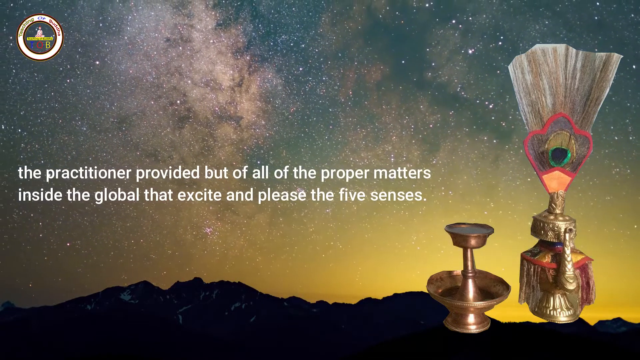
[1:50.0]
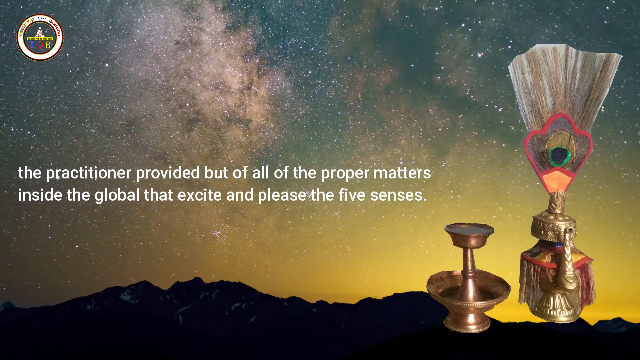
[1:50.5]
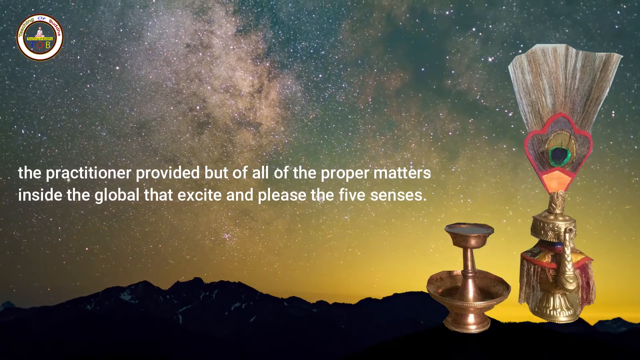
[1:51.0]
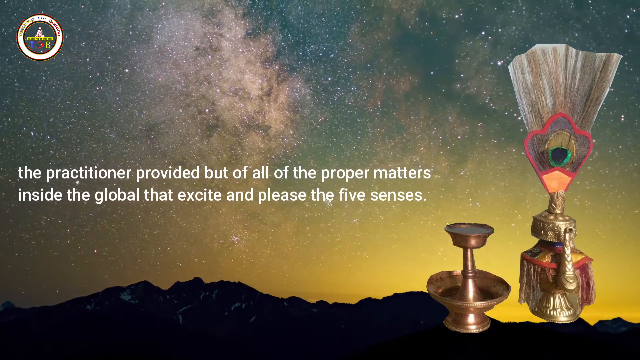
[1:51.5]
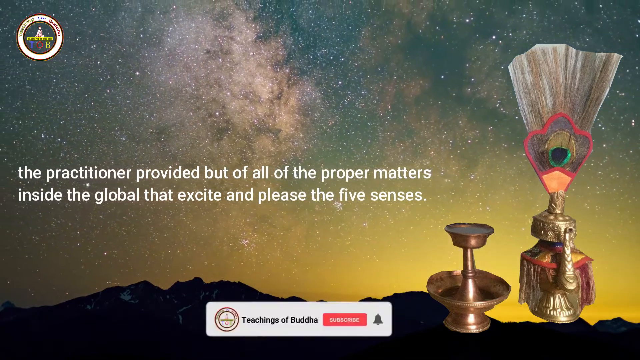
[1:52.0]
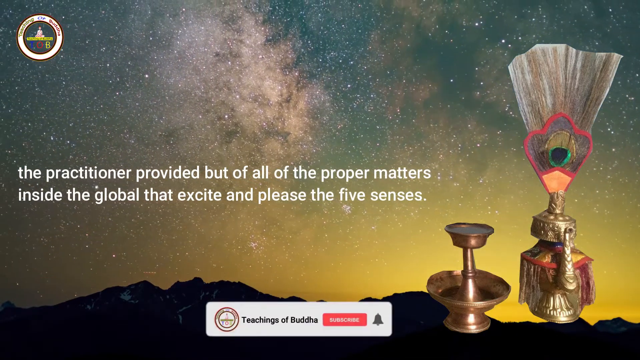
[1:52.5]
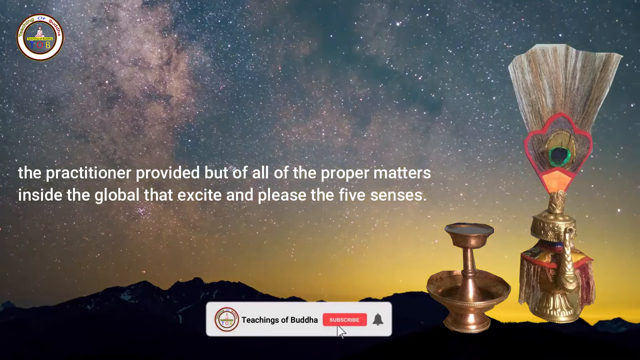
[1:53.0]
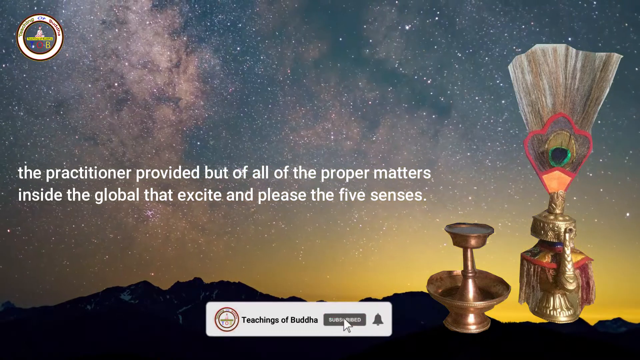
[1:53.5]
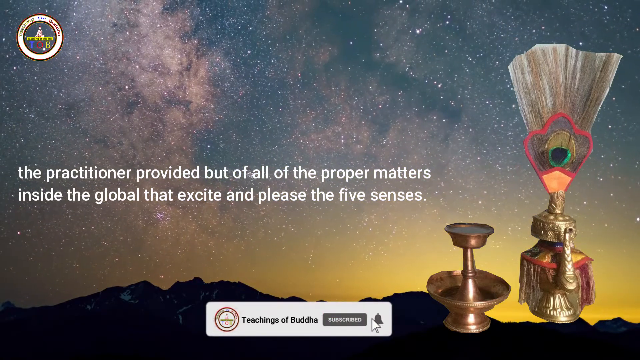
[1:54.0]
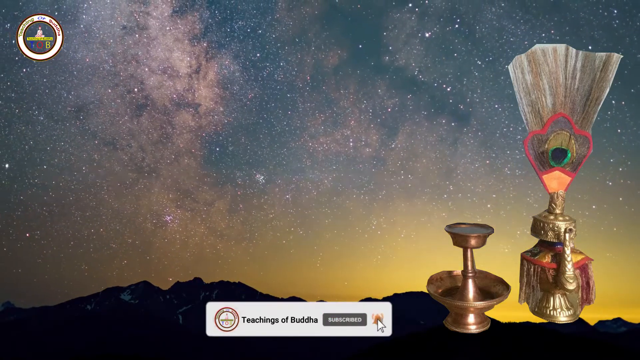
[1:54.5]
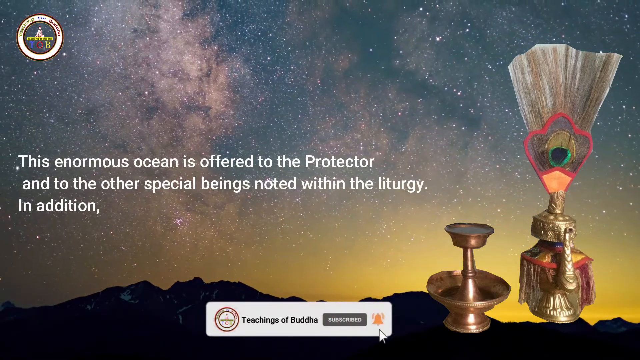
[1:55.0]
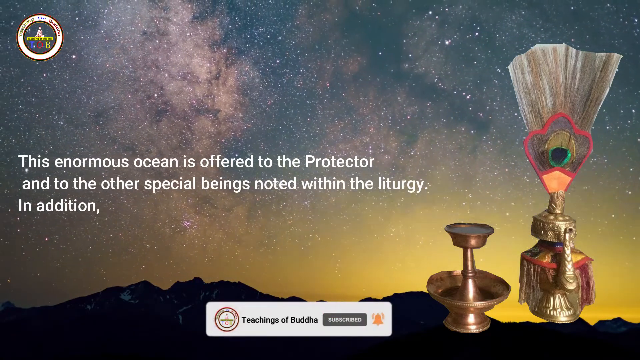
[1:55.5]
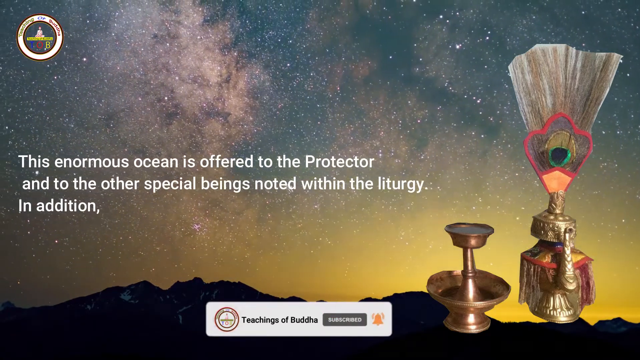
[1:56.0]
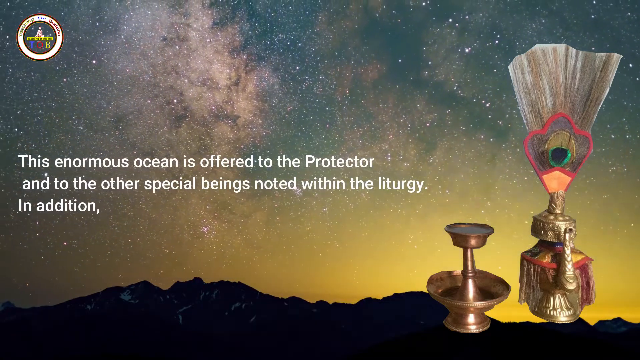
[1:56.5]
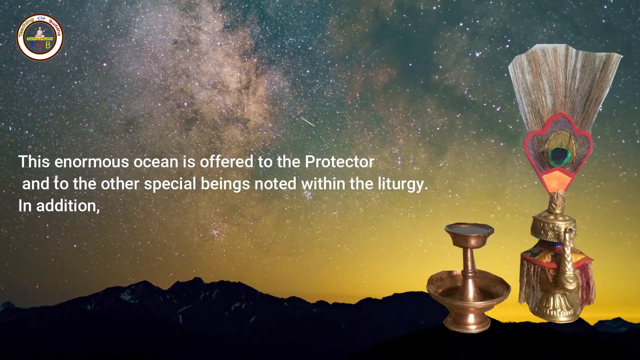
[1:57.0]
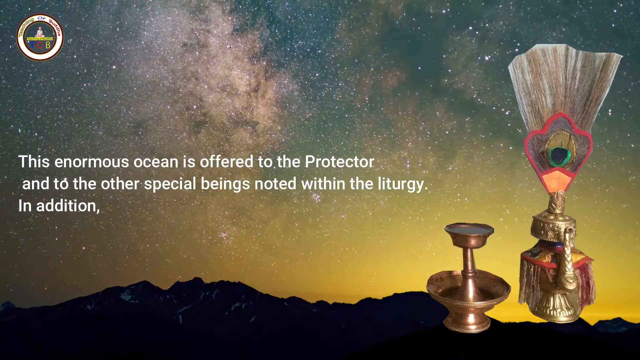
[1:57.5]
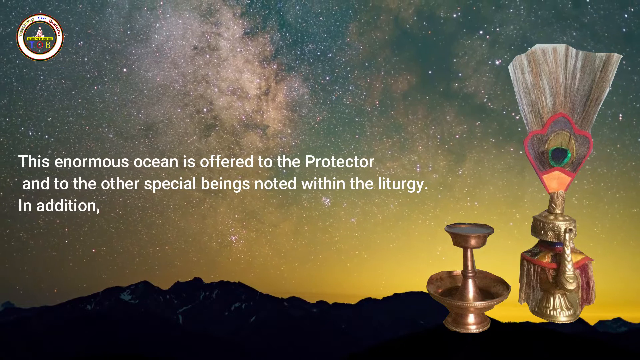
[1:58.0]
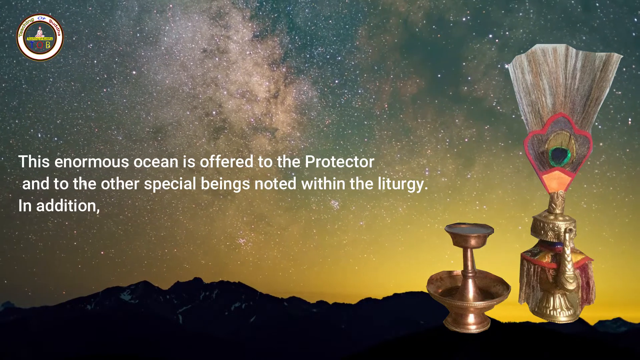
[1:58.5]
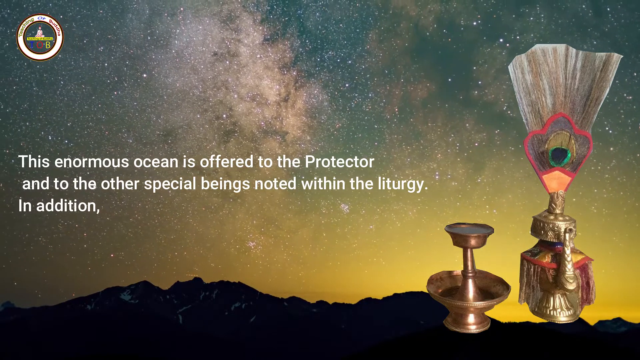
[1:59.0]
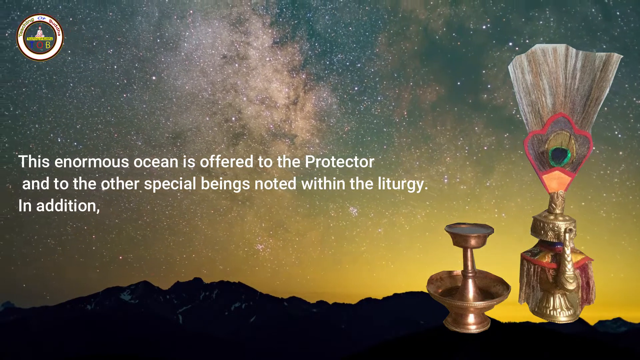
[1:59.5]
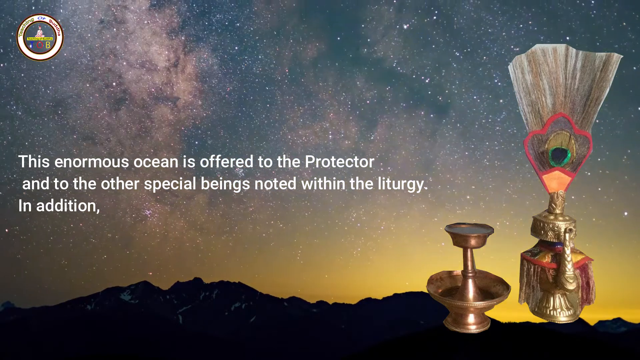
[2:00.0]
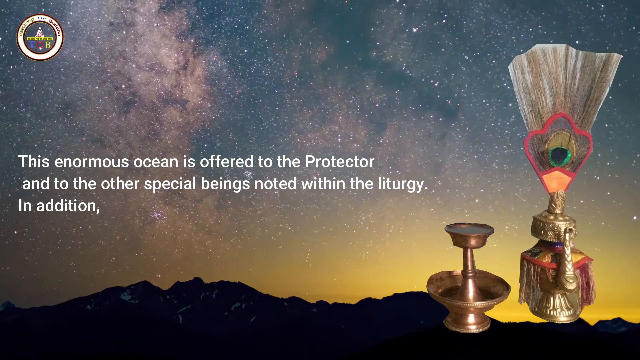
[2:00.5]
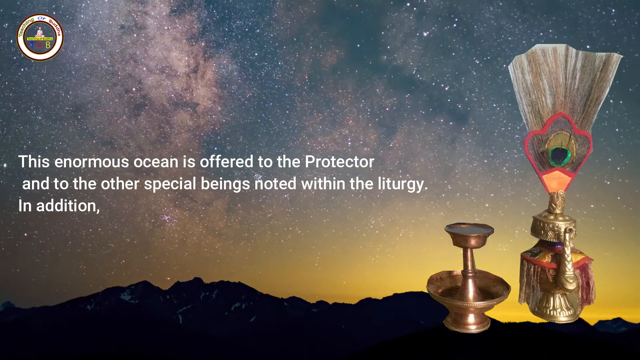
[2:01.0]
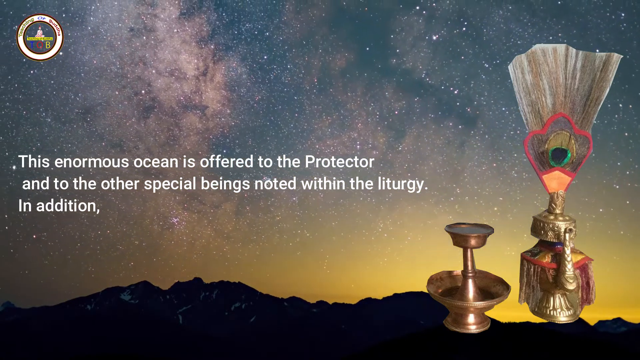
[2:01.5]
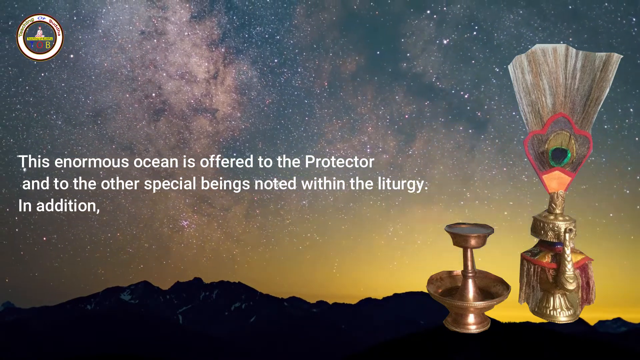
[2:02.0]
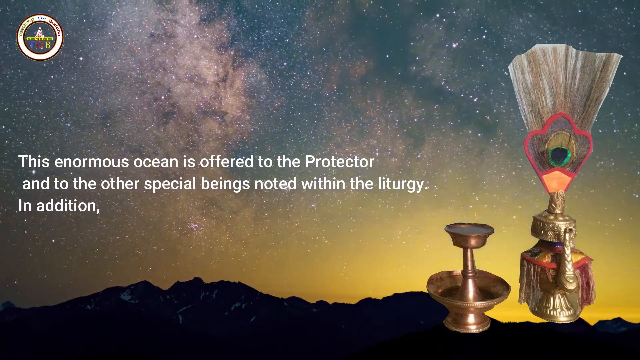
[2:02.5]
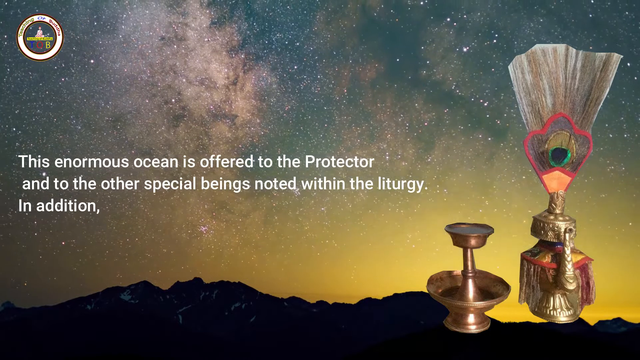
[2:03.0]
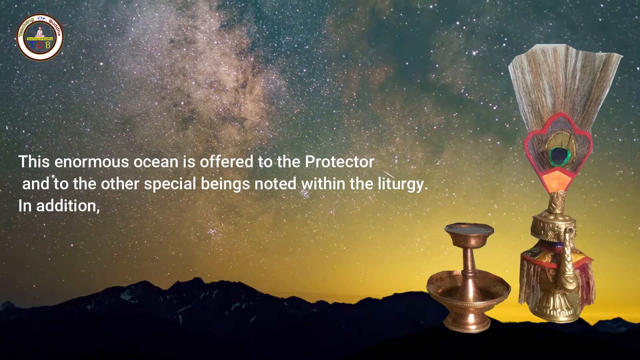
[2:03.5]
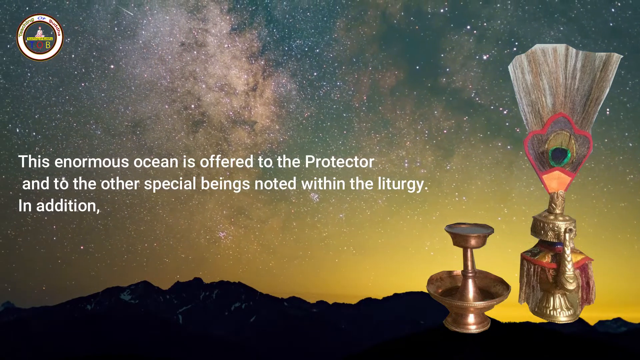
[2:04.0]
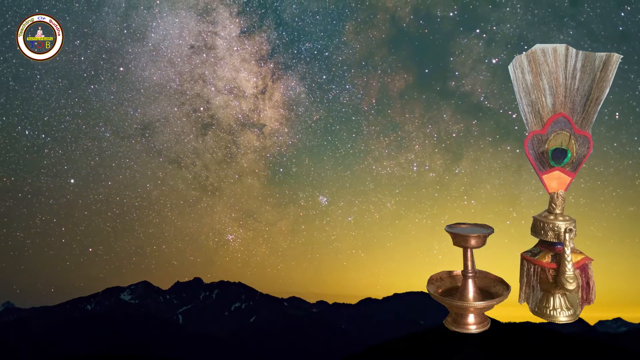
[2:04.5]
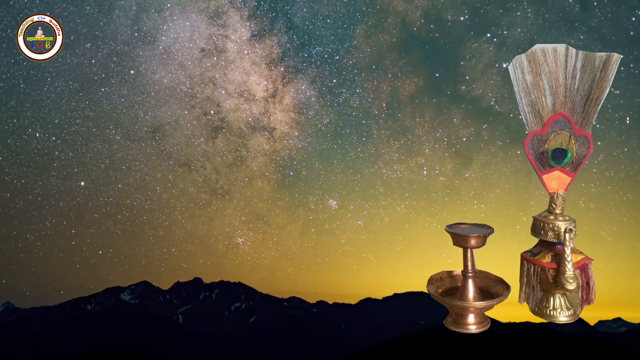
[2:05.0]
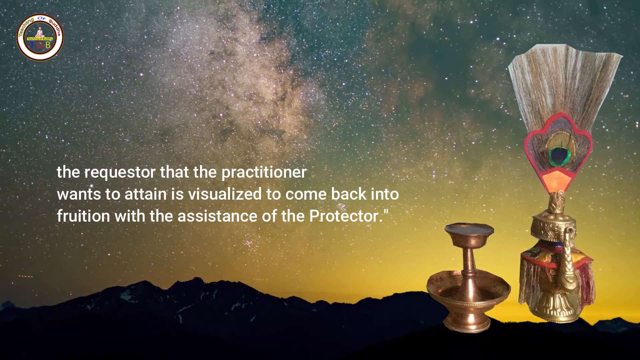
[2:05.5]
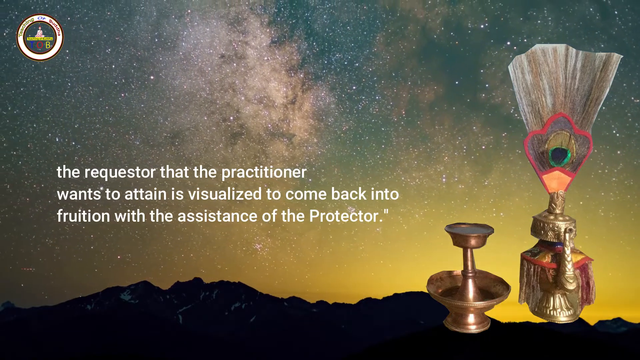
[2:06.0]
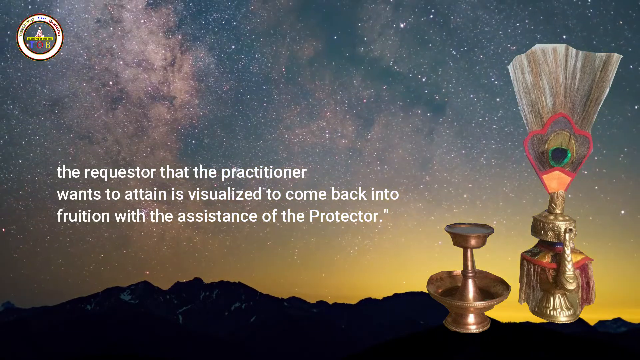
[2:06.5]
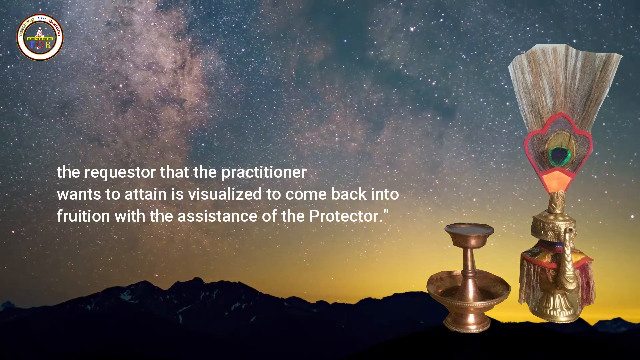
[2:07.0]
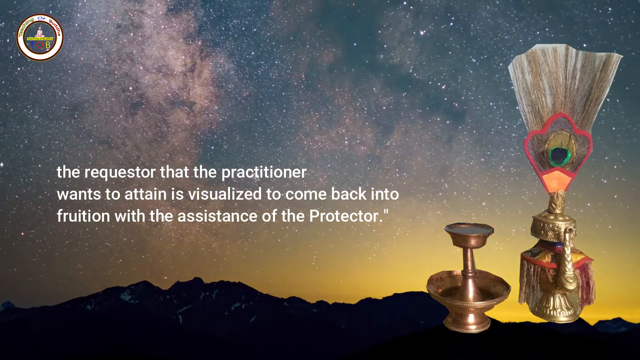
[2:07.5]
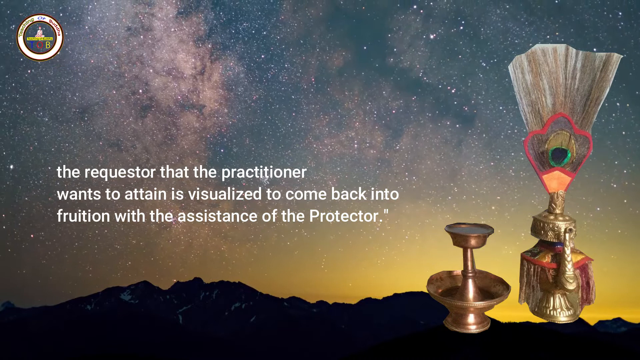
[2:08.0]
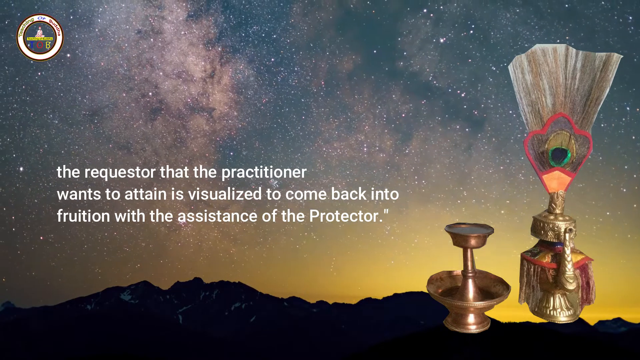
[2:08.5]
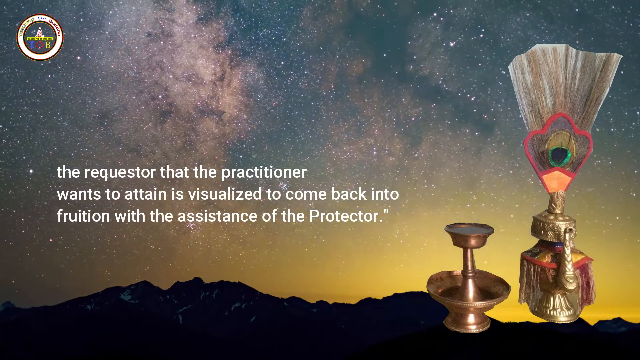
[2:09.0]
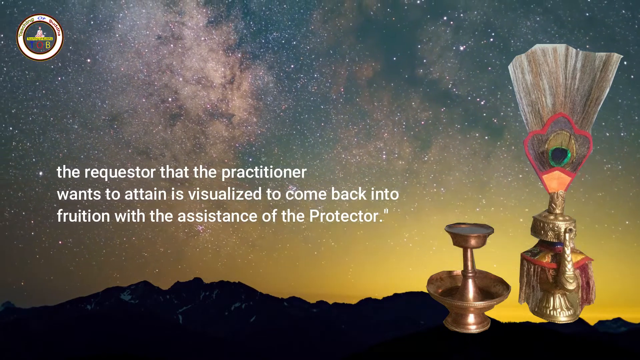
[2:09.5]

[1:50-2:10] The text continues about what "the practitioner provided" and ends with "please the five senses," staying for a little while. It then changes to "the enormous ocean is offered to the protector and to the other special beings noted within the liturgy in addition." In between, a pop-up at the bottom says "teachings of Buddha," reminding the viewer to subscribe. The next text change reads that what "the practitioner wants to attain is visualized to come back into fruition with the assistance of the protector." The artifacts on the far right side are still there; they look like they are made of some kind of metal. One looks like a pitcher with a feathered top that branches out, and the other looks like a small fountain with two bowls attached to each other.